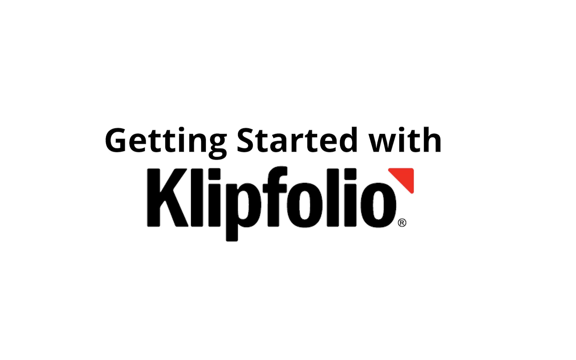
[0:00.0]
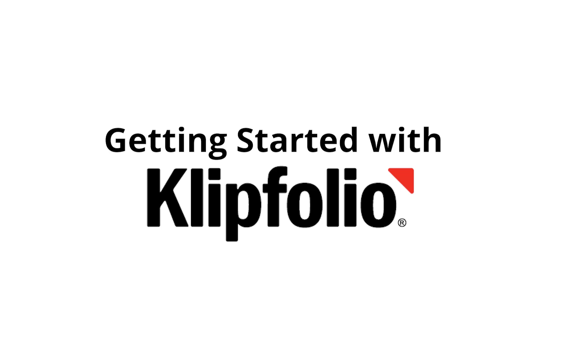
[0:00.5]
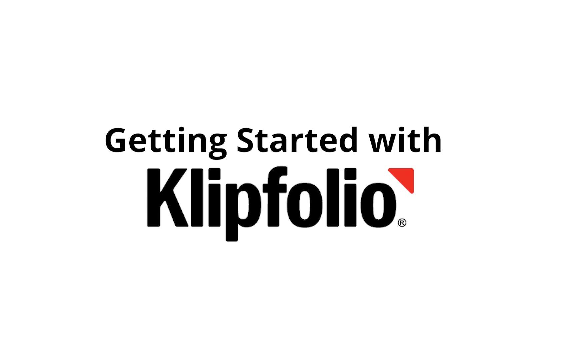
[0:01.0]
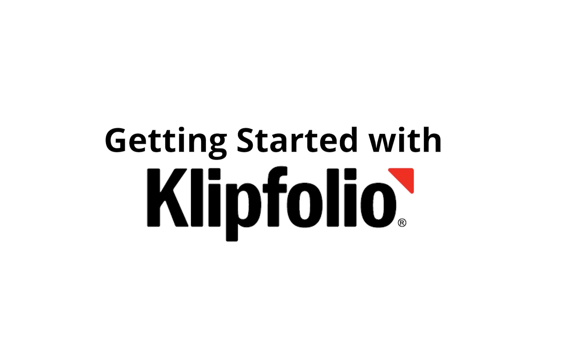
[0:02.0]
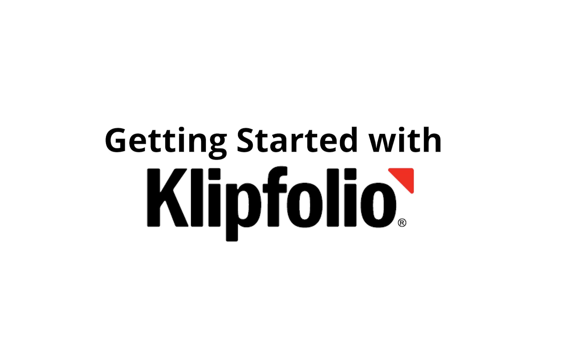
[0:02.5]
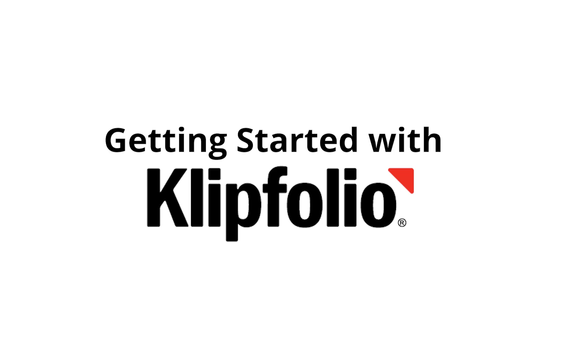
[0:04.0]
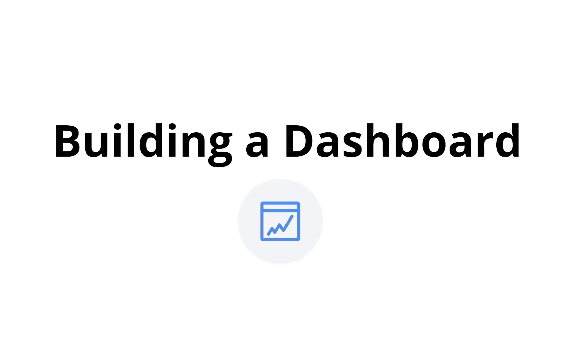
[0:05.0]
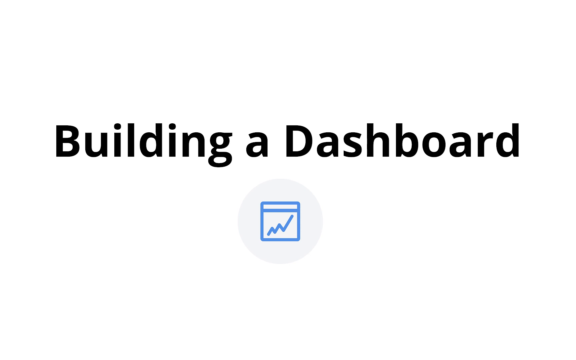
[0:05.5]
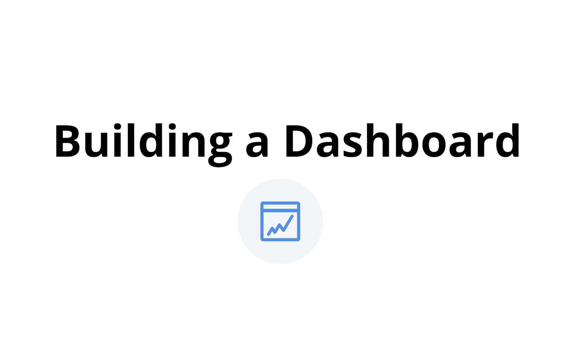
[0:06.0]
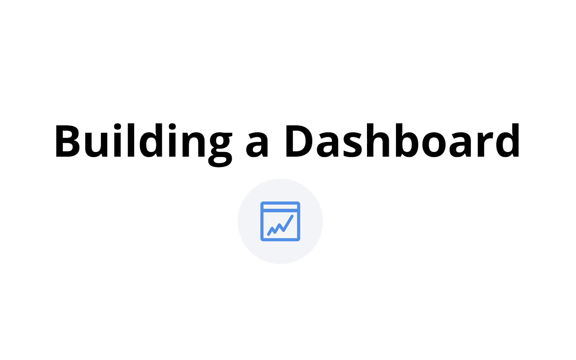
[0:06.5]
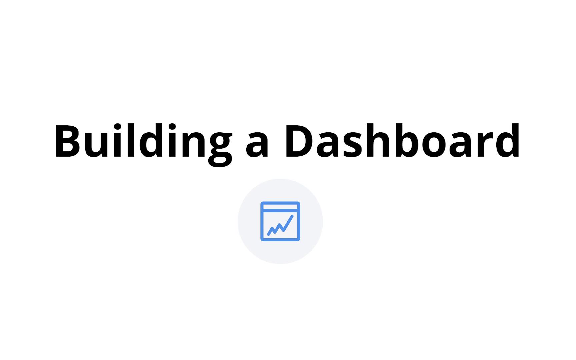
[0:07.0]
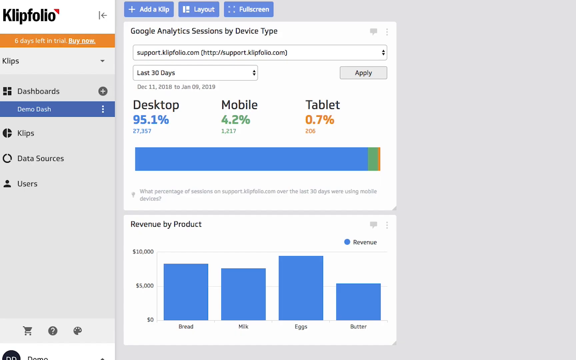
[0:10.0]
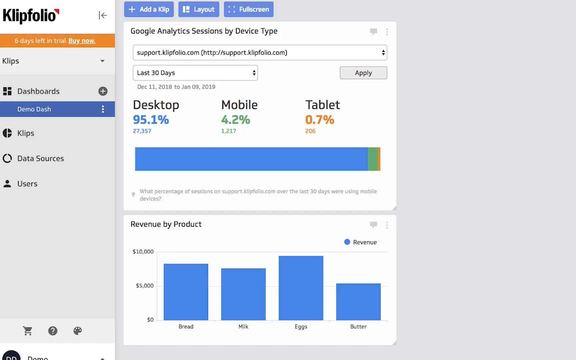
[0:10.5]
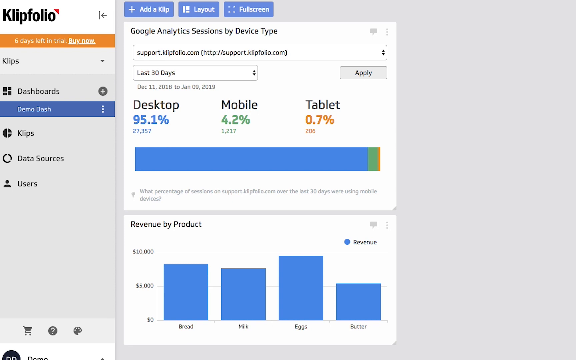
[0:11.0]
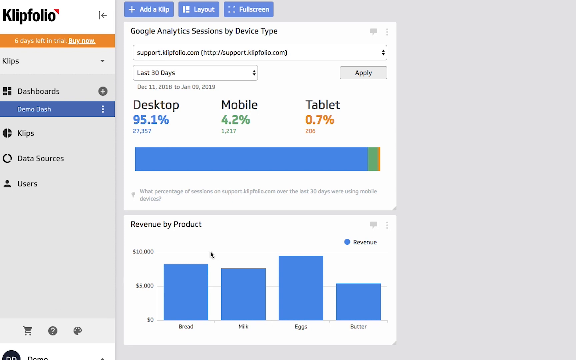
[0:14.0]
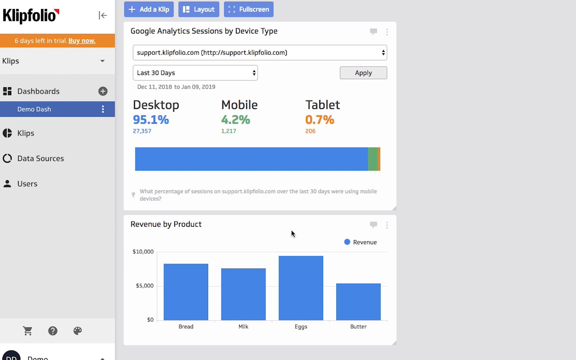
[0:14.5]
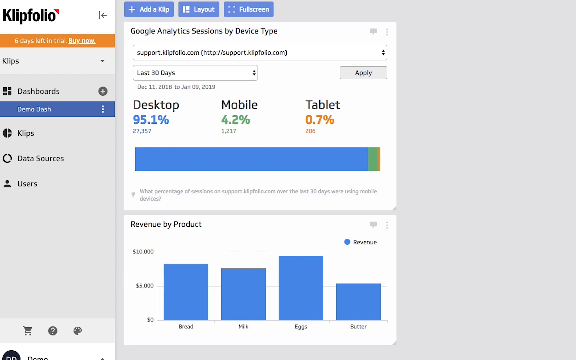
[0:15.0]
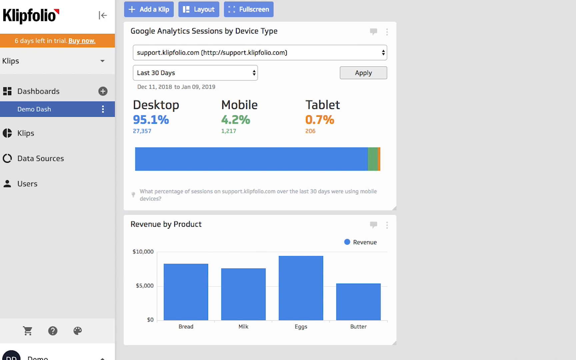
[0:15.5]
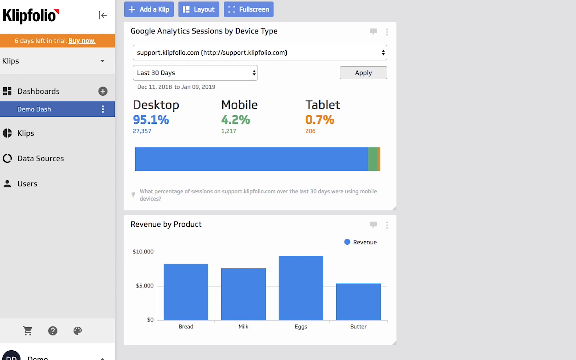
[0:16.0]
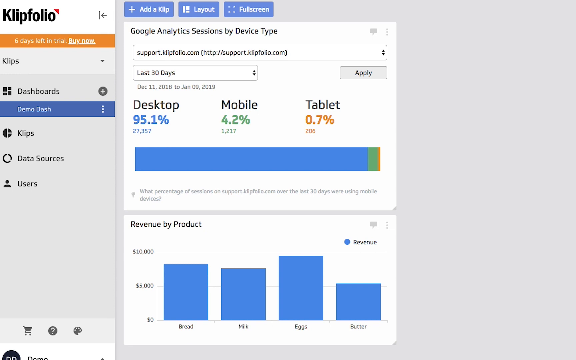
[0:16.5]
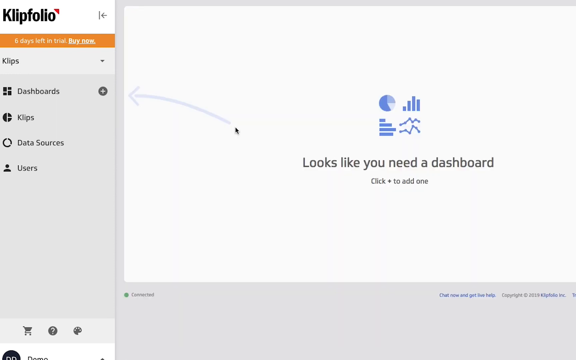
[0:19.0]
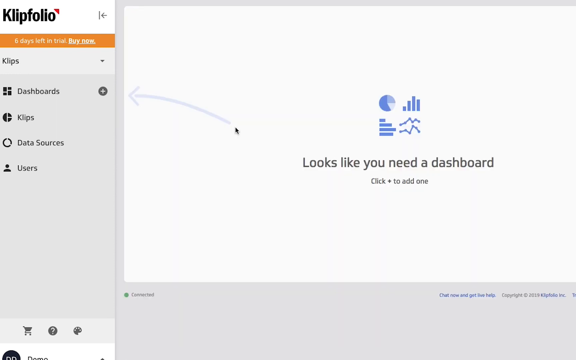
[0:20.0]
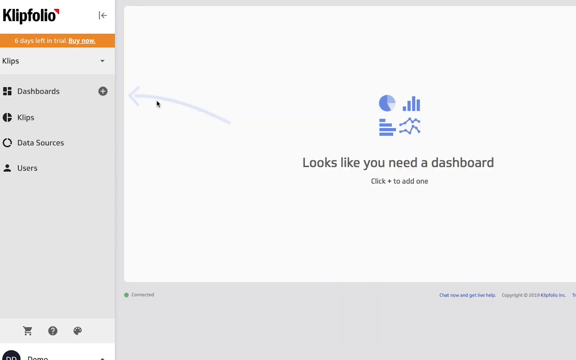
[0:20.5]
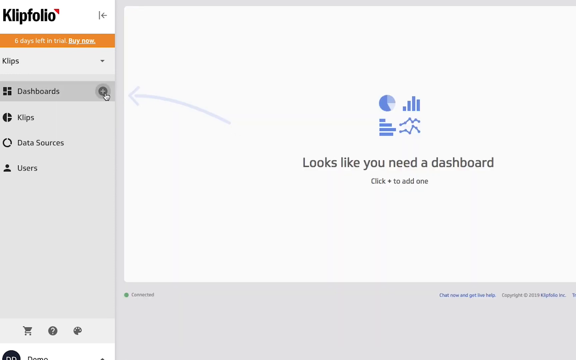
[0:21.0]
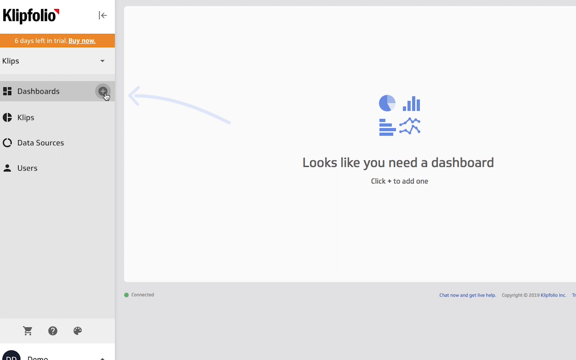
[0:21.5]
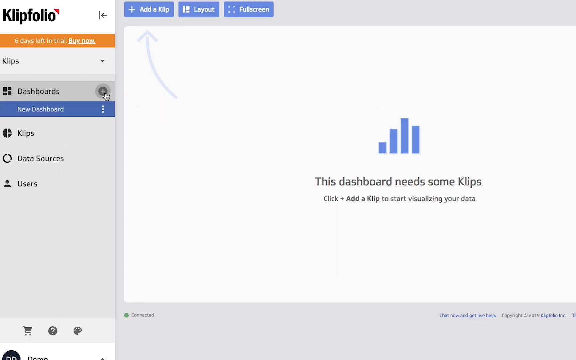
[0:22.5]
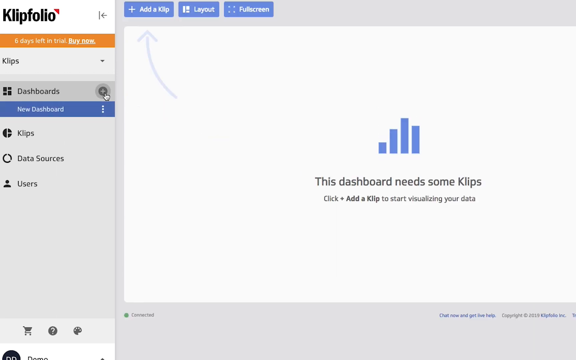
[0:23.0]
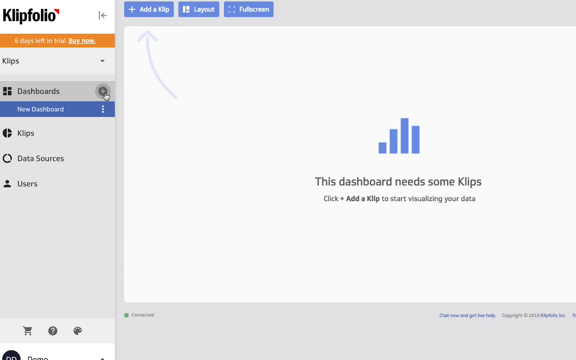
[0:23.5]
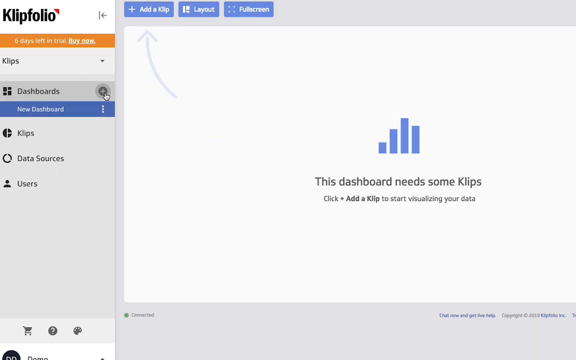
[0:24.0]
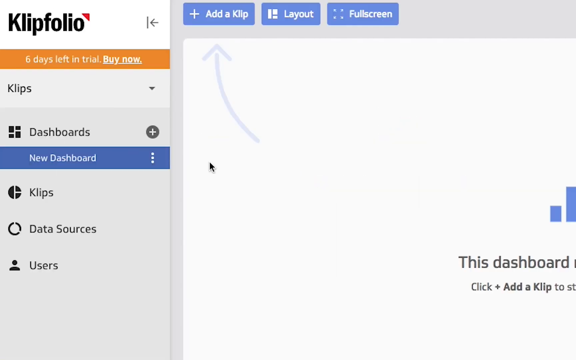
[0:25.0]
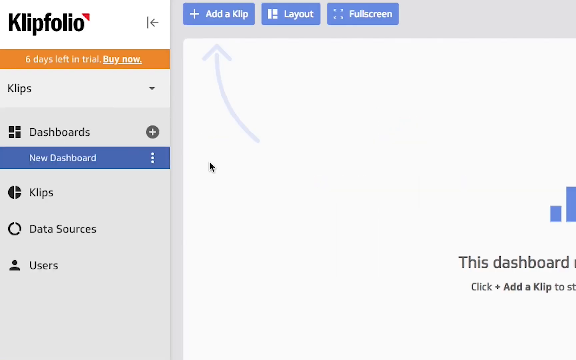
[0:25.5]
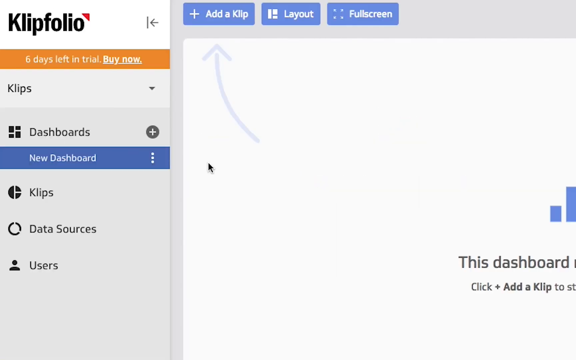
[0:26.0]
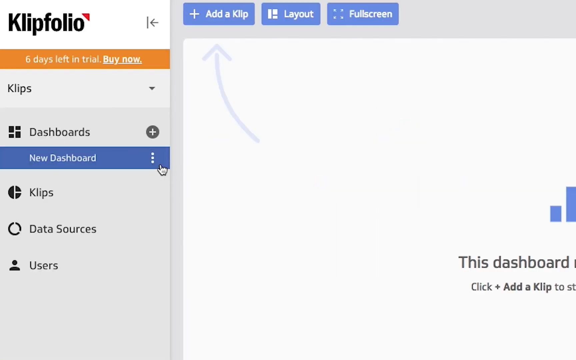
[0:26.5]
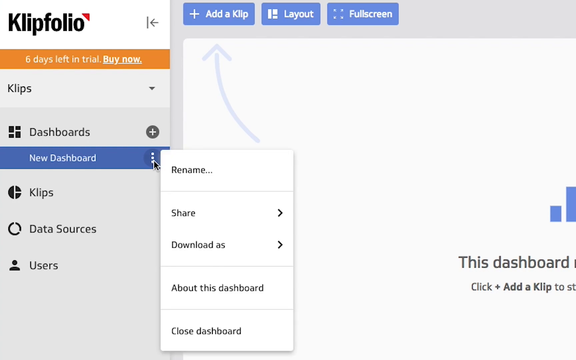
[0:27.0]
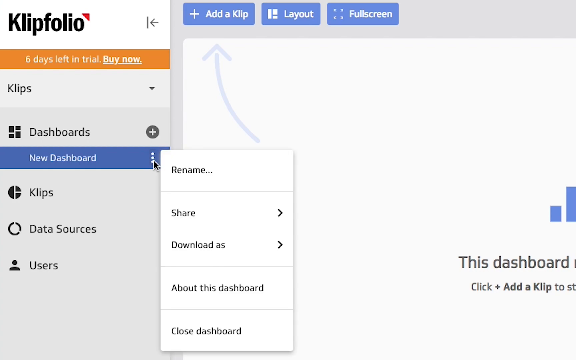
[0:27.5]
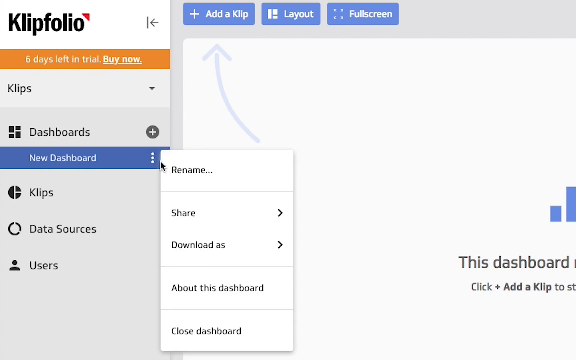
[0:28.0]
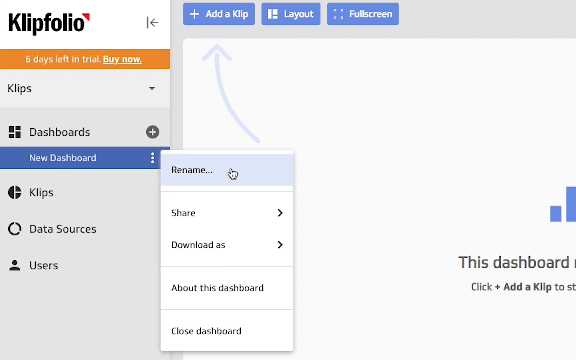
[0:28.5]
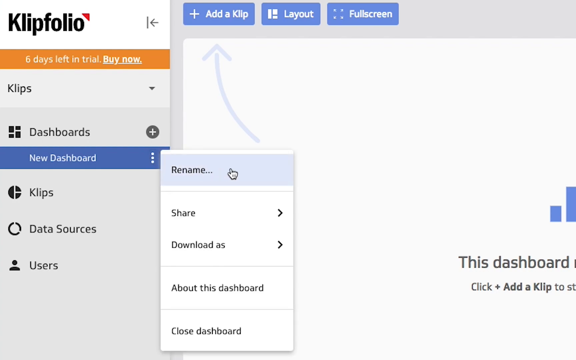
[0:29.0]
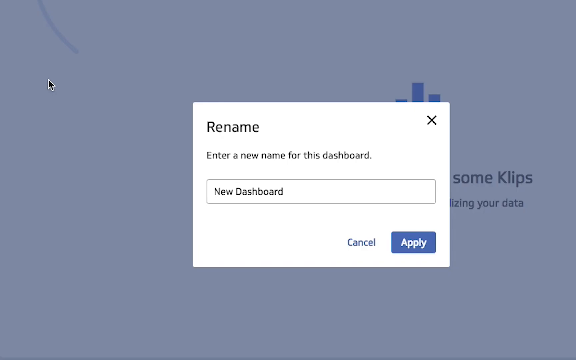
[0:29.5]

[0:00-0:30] The thumbnail shows the title "getting started with Klipfolio," with a little red triangle at the top and an R mark for a registered name. The video opens on a white screen with black letters. Then "building a dashboard" appears, along with a little square showing a graph going up. Bar graphs follow, with the text "looks like you need a dashboard." The person goes to the dashboard, which shows "new dashboard," clicks on the three dots, and reaches the part where a name is entered. The website has sections for clips, data sources and users, along with options to add a clip, change the layout, switch to full screen mode, and share. The video is probably someone teaching a tutorial.